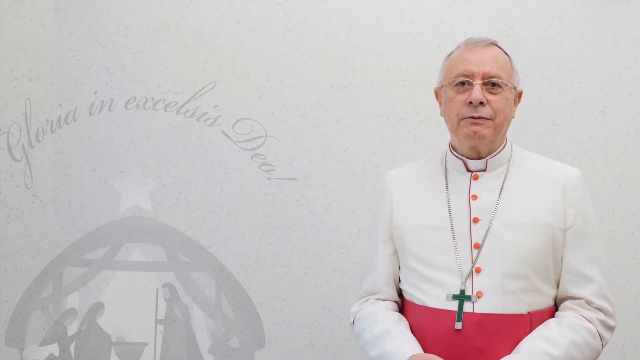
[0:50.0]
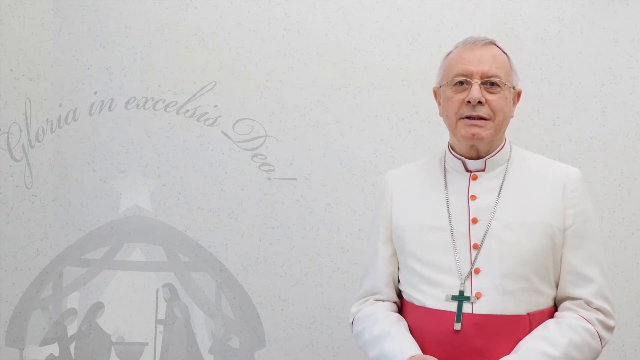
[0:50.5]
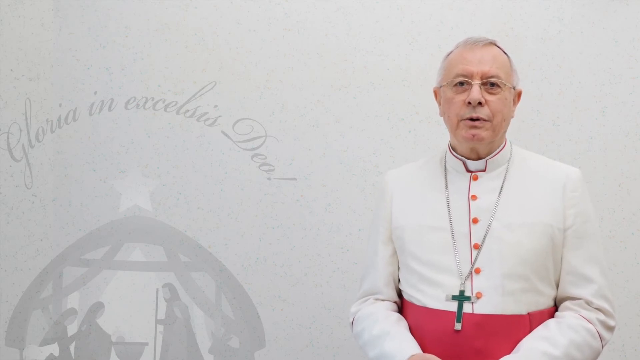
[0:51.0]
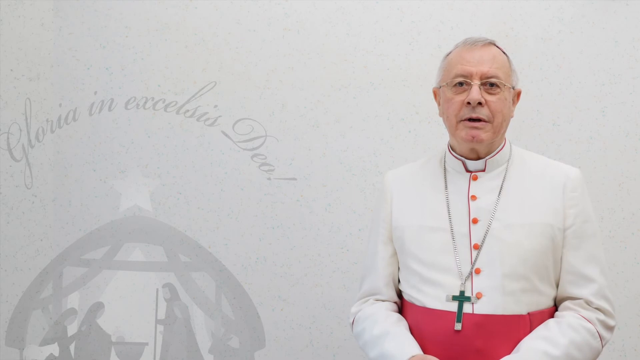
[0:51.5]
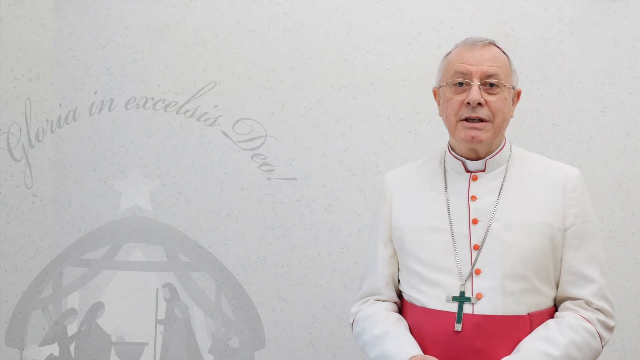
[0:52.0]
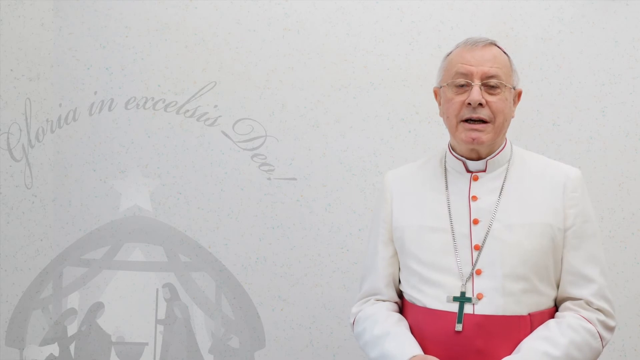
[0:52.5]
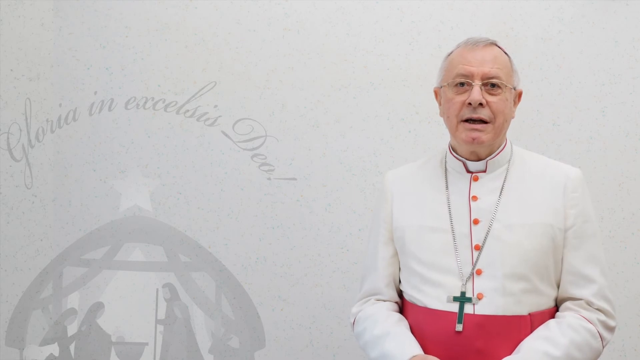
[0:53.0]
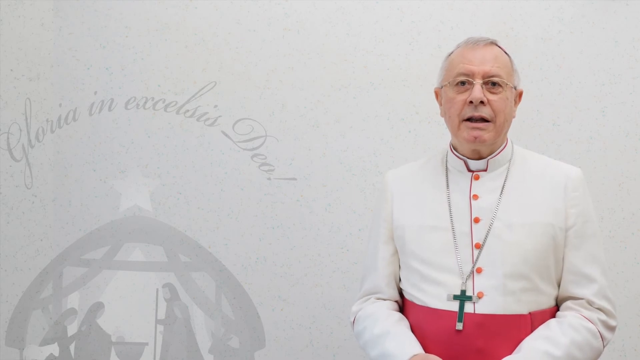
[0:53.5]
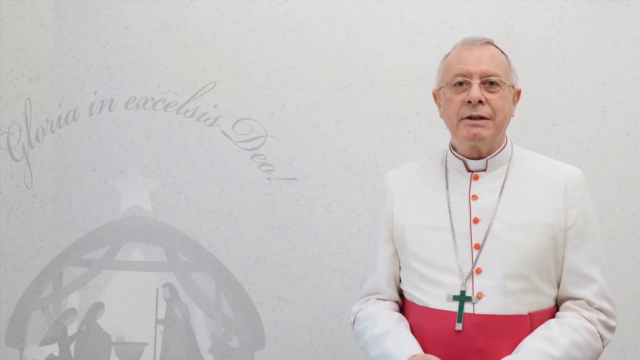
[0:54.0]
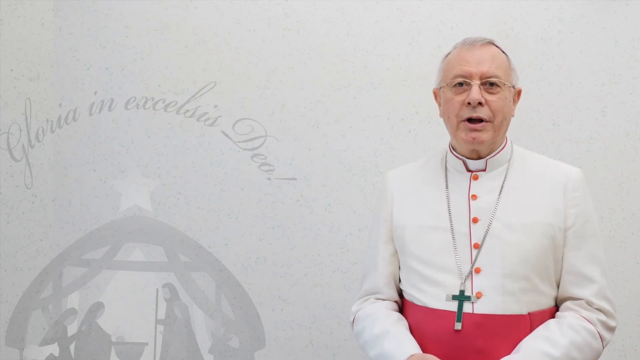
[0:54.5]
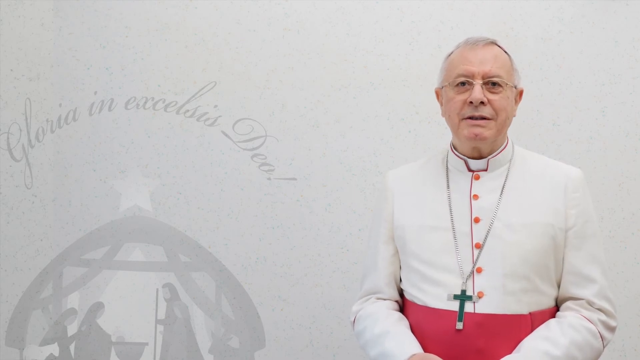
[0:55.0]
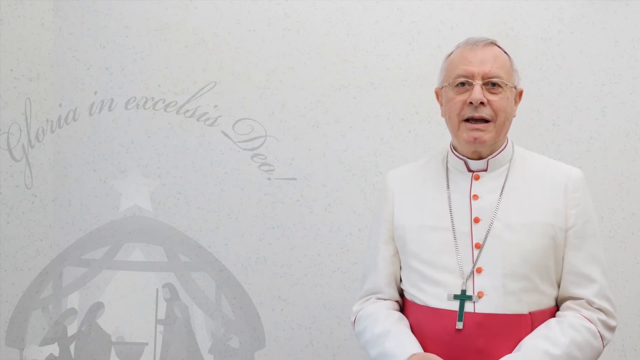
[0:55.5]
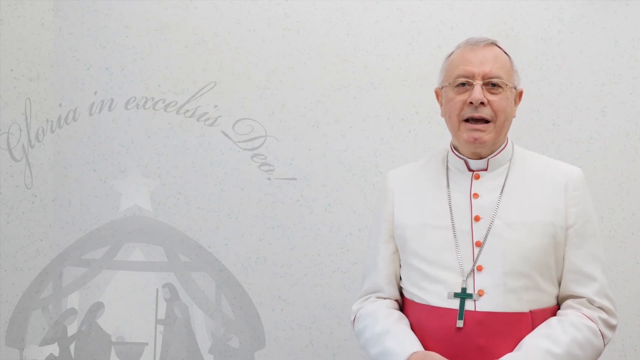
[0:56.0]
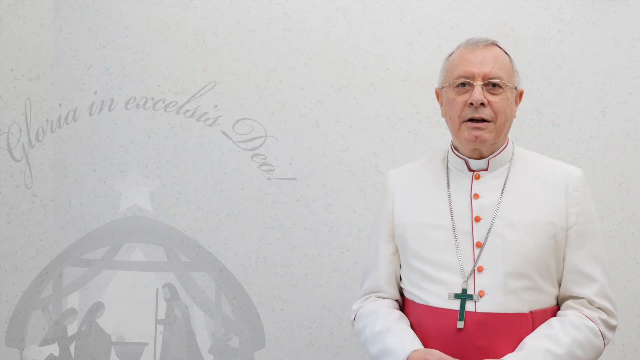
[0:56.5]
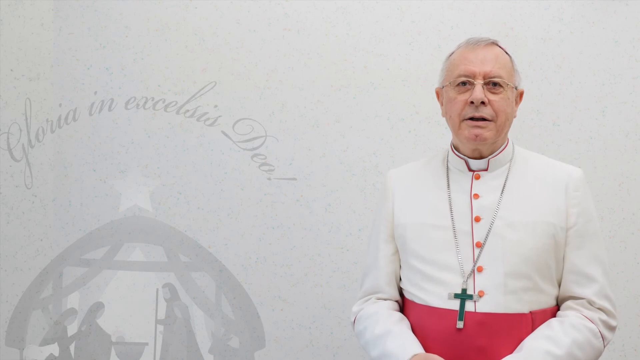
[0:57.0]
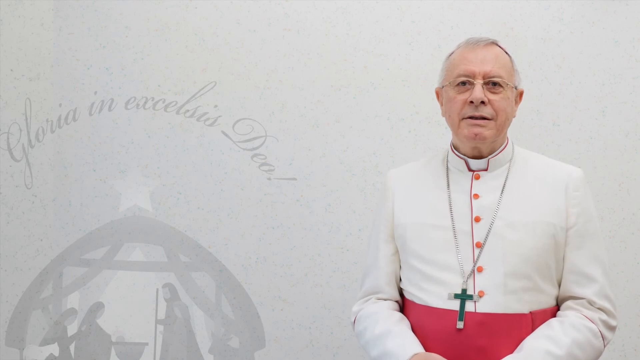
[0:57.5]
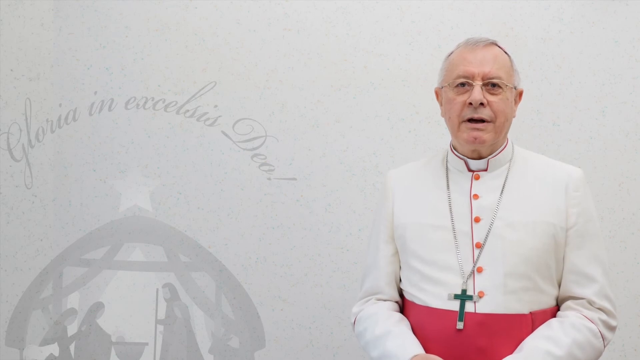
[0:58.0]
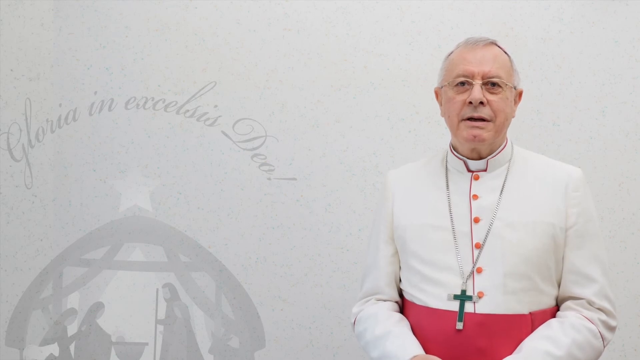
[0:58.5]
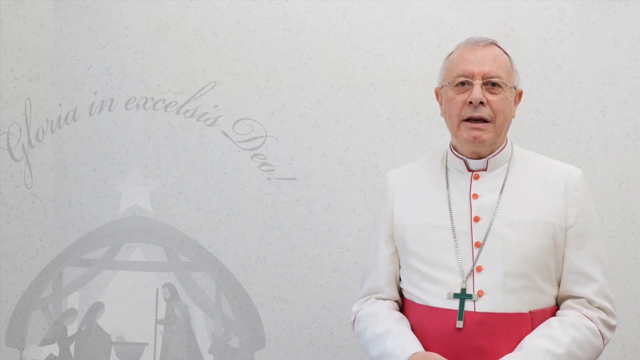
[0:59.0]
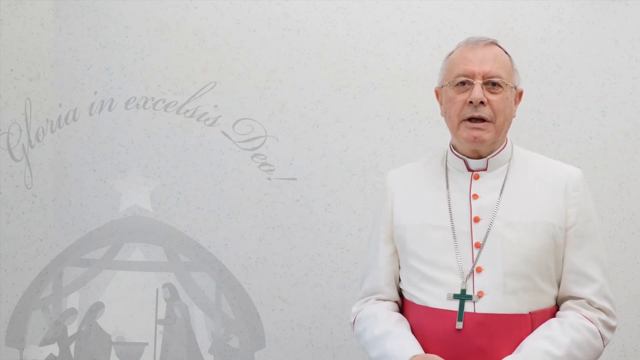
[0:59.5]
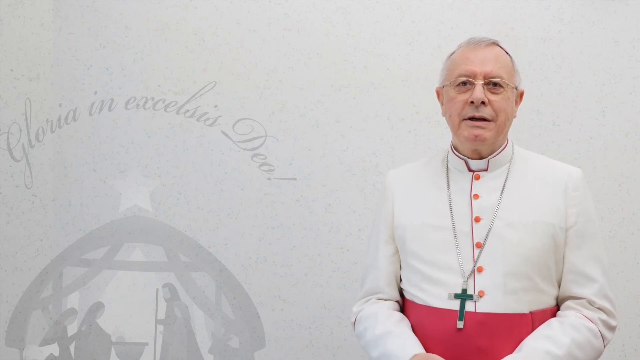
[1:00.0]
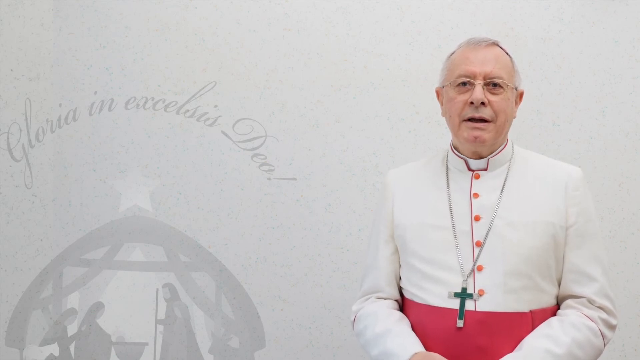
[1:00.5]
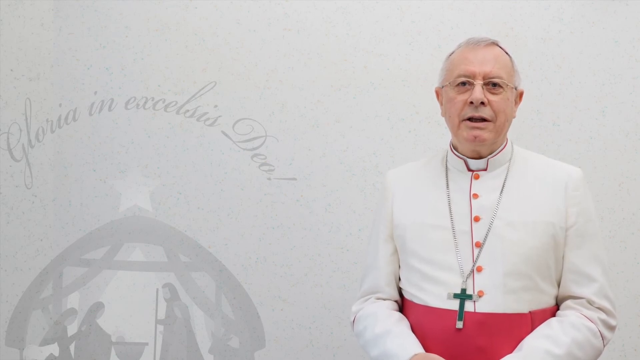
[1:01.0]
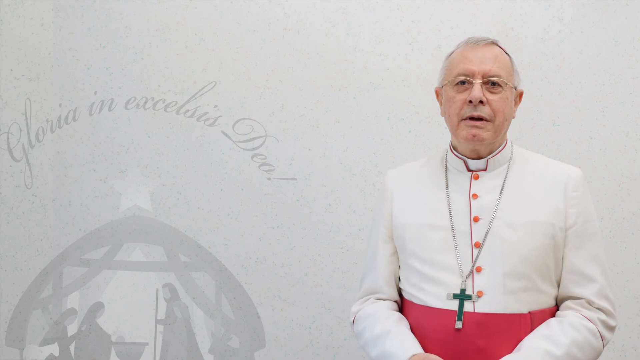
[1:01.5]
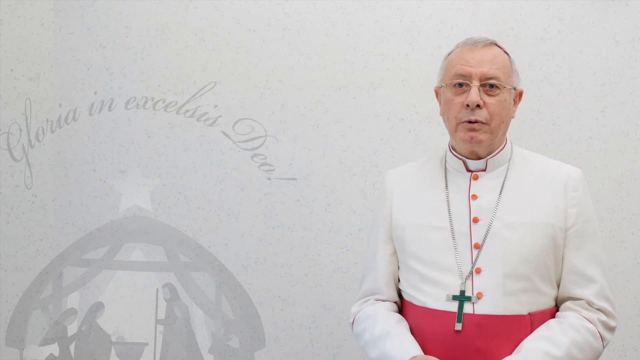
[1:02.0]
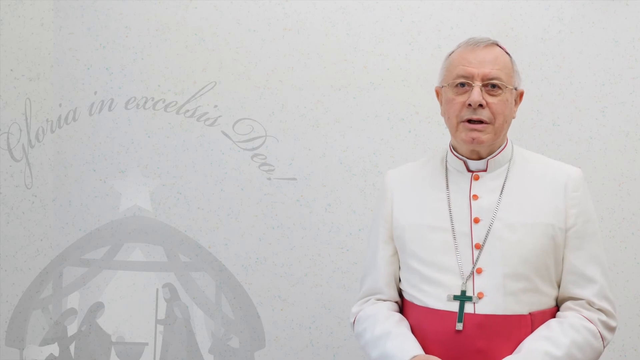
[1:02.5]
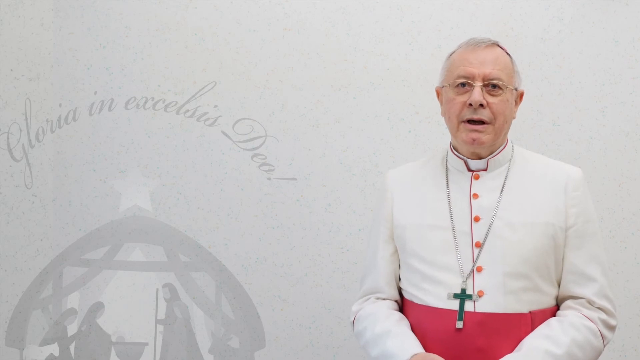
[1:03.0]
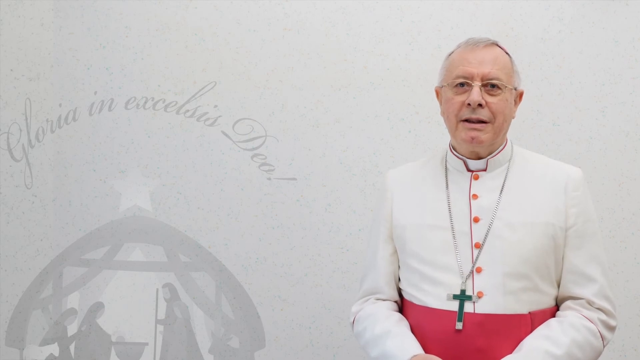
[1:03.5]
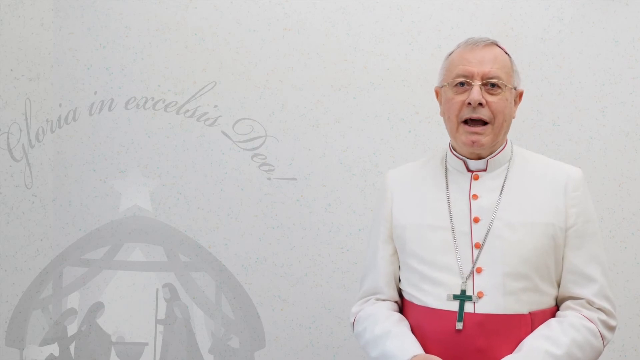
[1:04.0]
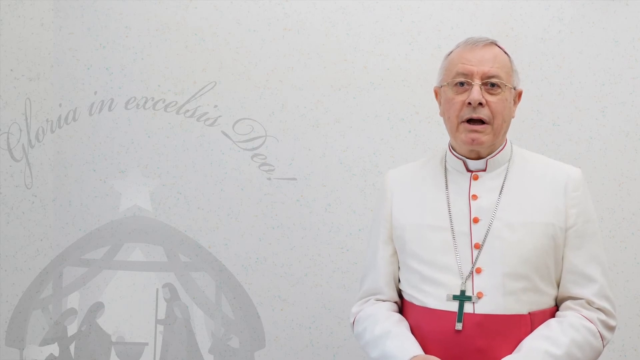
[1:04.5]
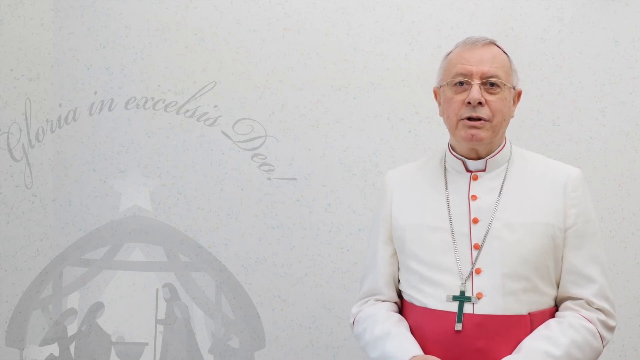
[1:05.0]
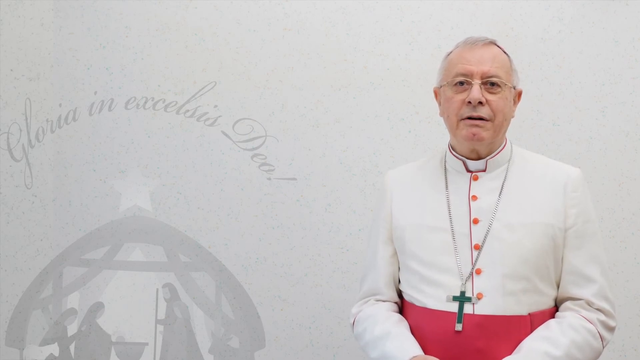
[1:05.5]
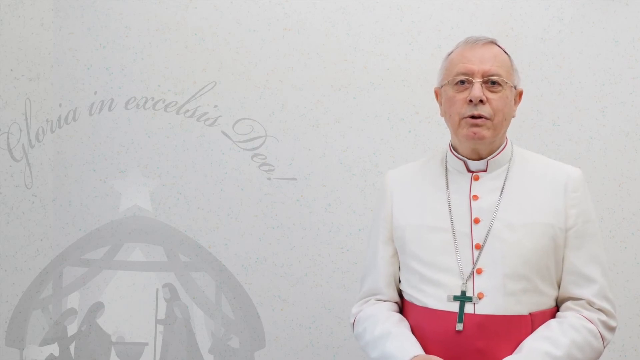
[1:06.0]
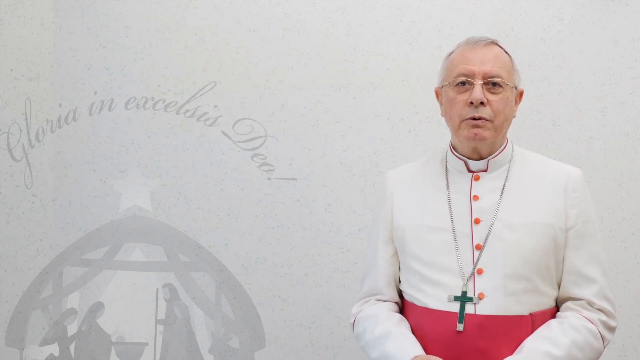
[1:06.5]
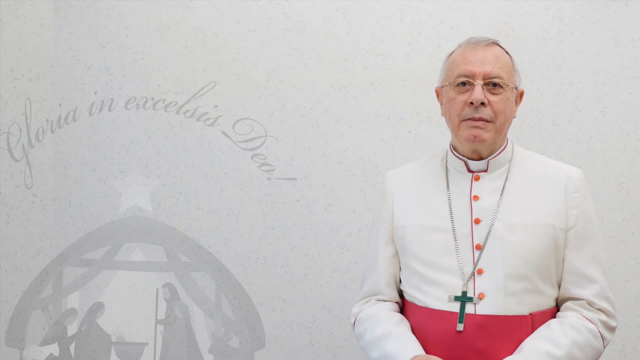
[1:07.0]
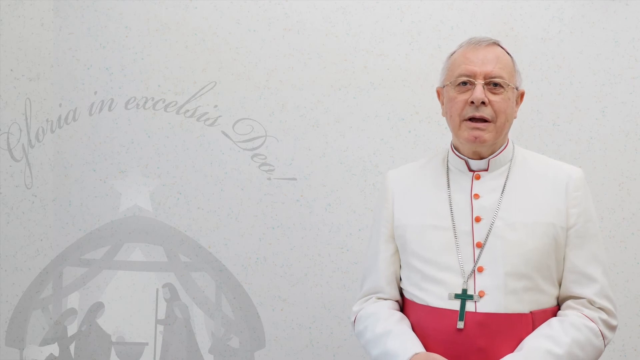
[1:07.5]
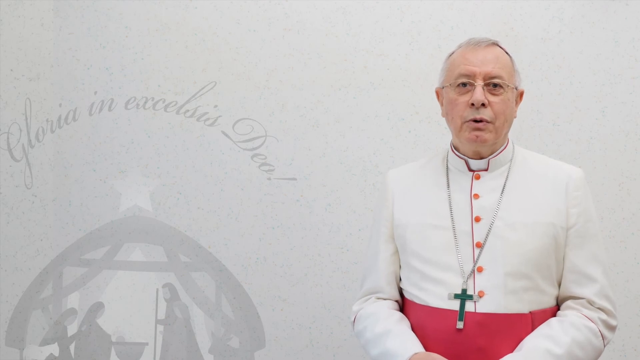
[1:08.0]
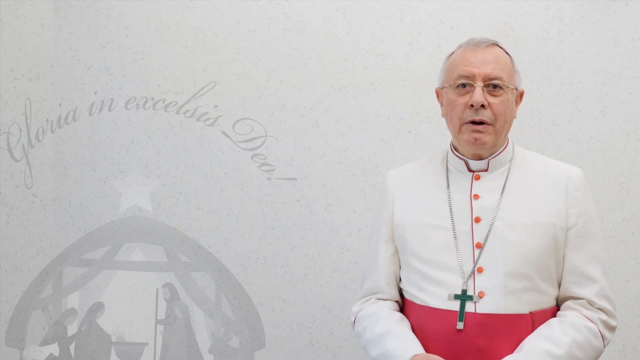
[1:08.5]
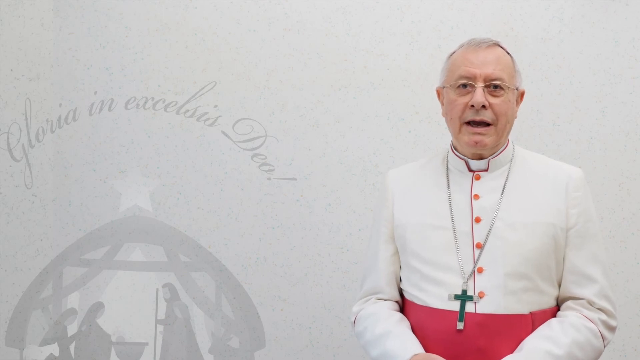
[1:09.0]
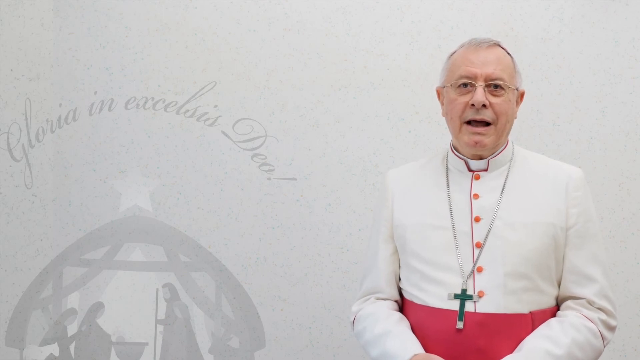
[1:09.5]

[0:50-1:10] A man stands to the right in front of a light gray background. On the left side are some words written in cursive, and below them is a picture of what appears to be the nativity scene, with a star directly above the picture. The man appears to be talking directly into the camera; his mouth does a slight smile at times, and his arms move slightly as he speaks. A chain around his neck has a dark green cross at the end. He wears glasses, and something covers the top of his head. He wears a light red or pink belt around the midsection of his garment, and light red or pink buttons go down the front of the garment.